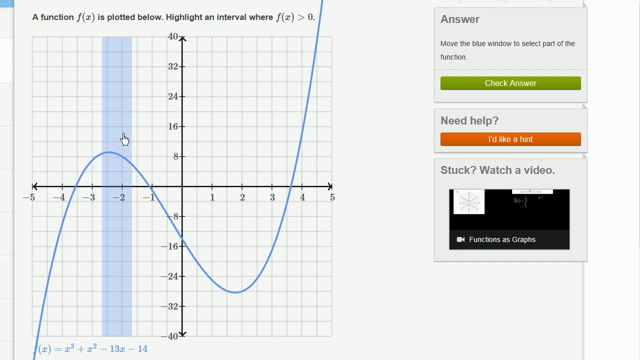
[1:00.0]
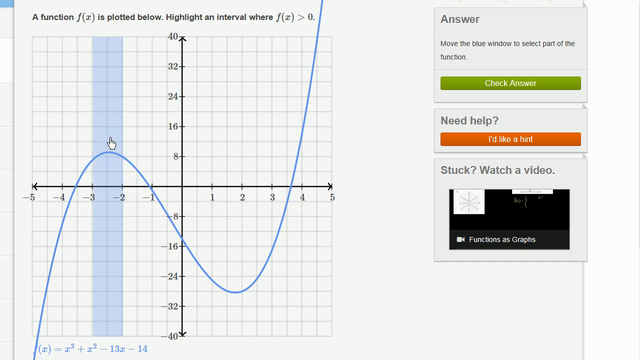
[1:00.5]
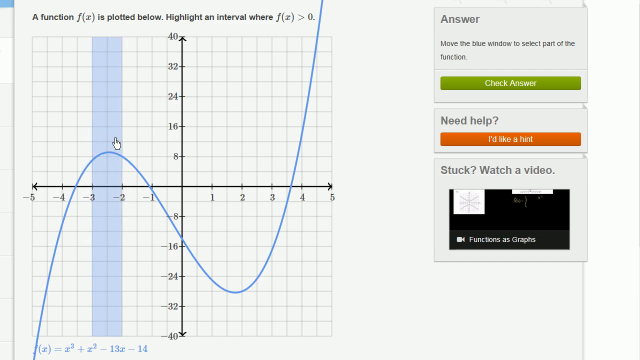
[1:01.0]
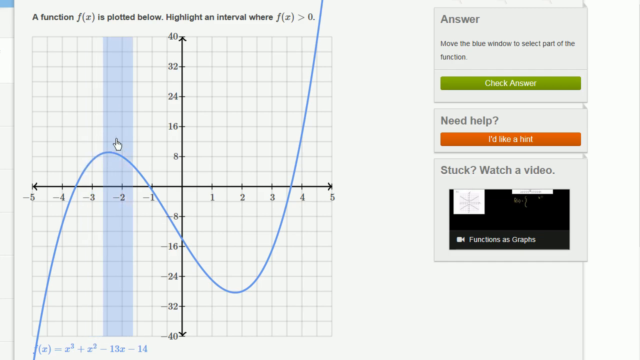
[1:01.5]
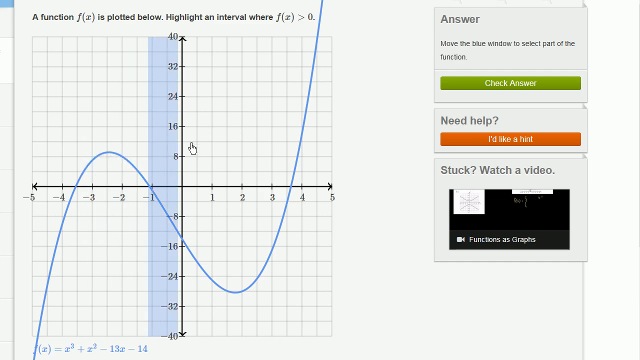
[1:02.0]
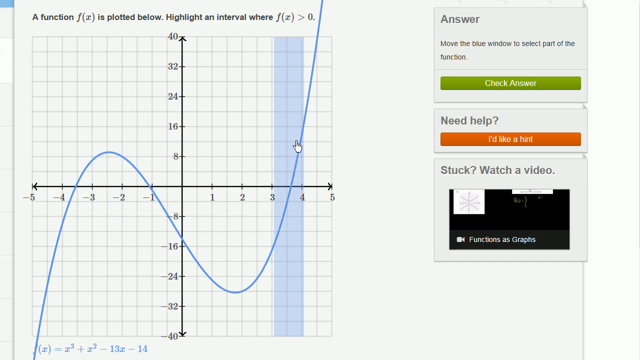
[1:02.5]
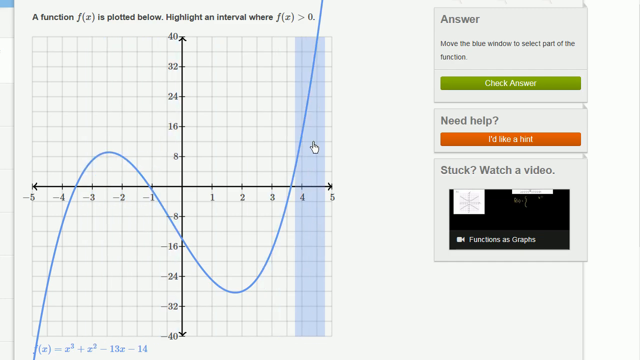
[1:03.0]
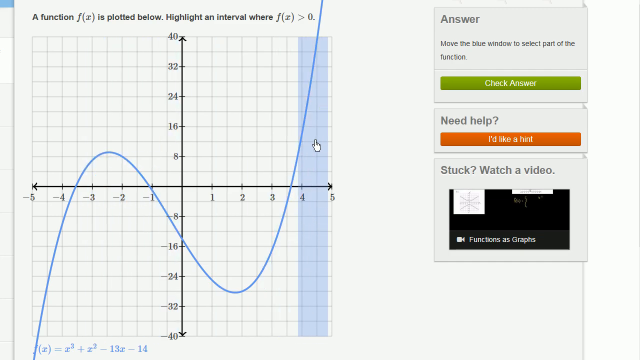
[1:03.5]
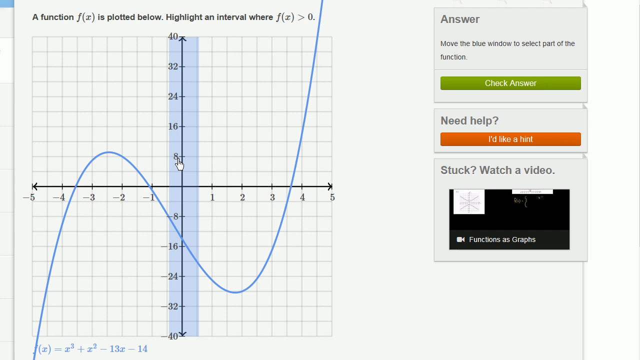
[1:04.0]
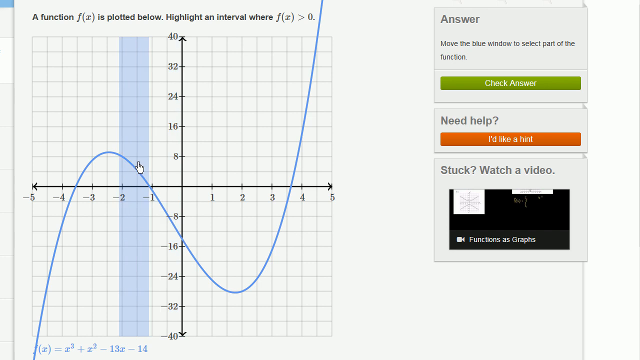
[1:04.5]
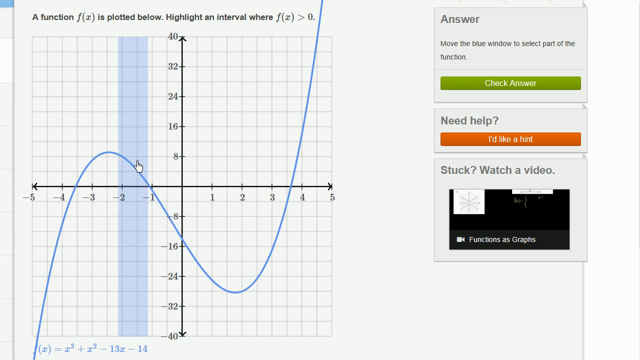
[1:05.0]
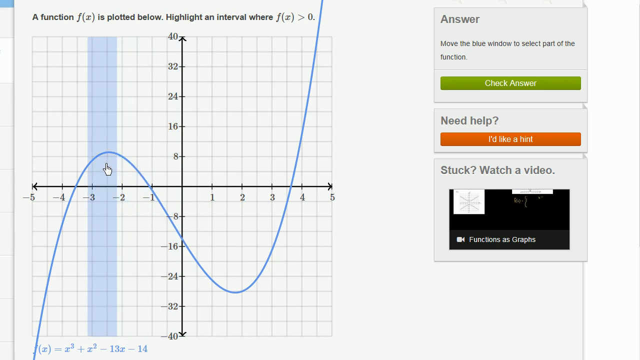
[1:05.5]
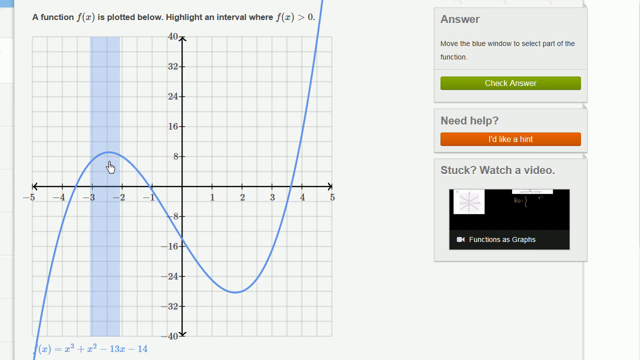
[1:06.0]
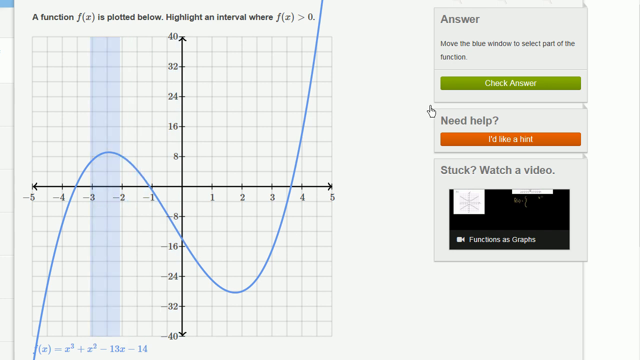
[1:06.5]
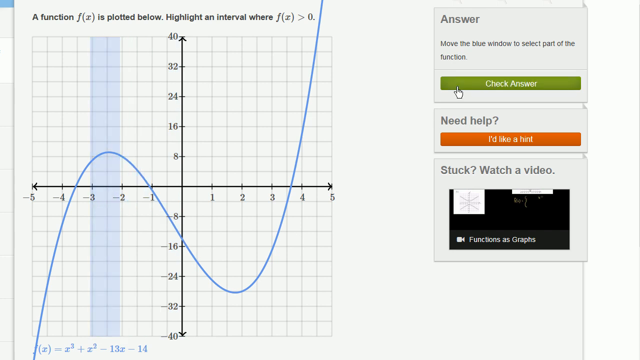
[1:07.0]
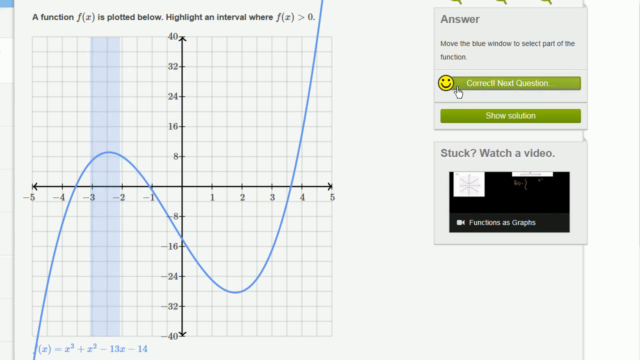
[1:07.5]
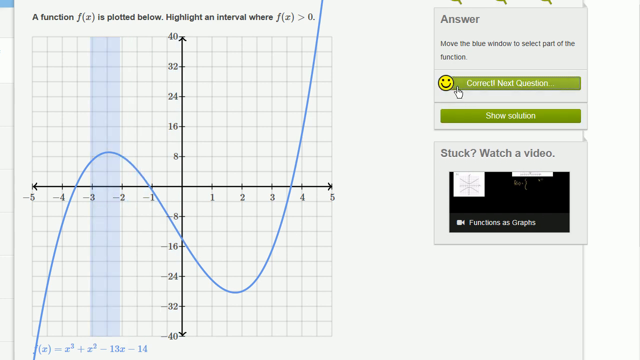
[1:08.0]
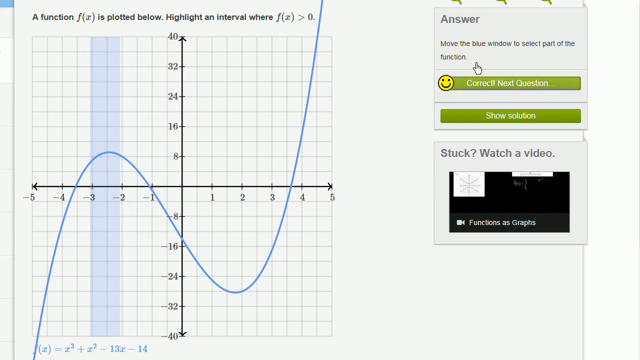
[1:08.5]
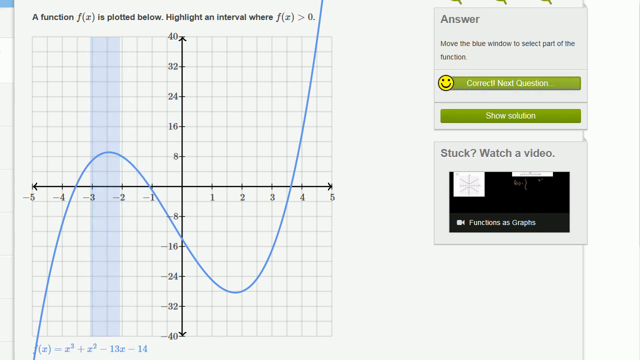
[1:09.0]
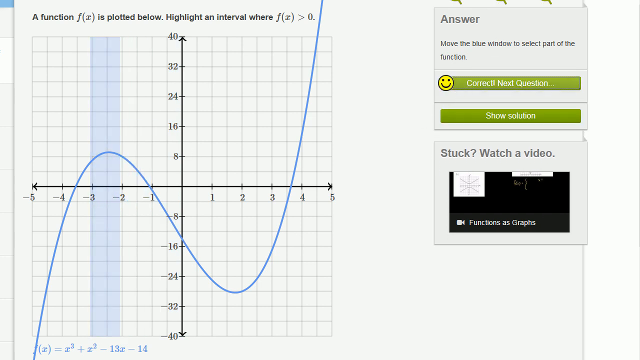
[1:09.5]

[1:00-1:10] The same function continues on screen, with text reading "highlight an interval where f of x is greater than 0." The person moves the rectangle back and forth, stops at a certain spot, and checks the answer, and the screen says "correct," followed by an option for the next question. It could be a student practicing or an instructor showing a class what is expected.